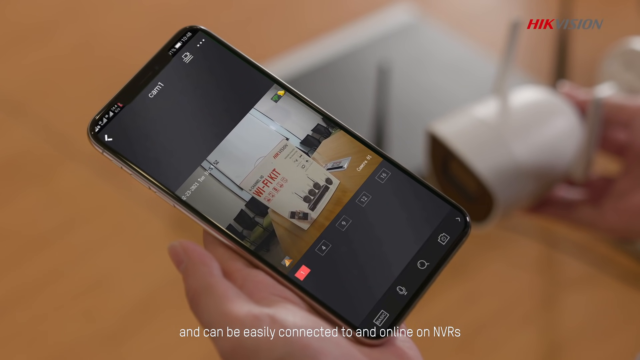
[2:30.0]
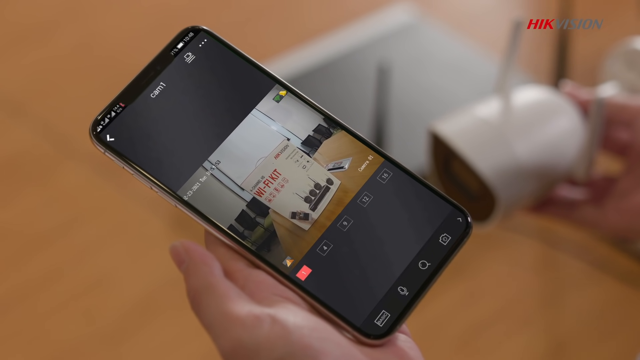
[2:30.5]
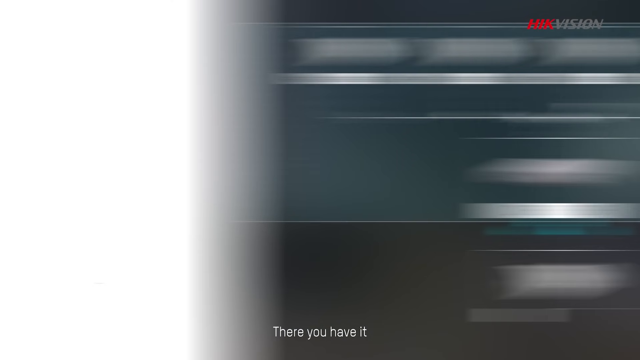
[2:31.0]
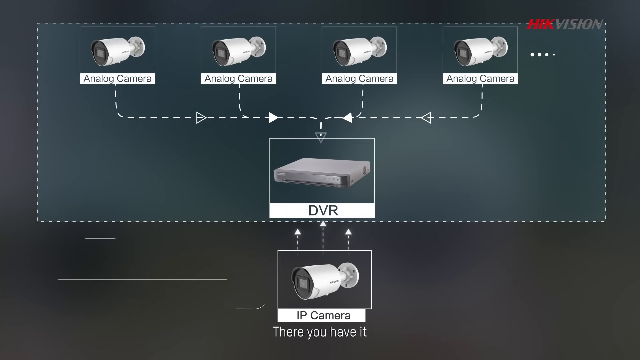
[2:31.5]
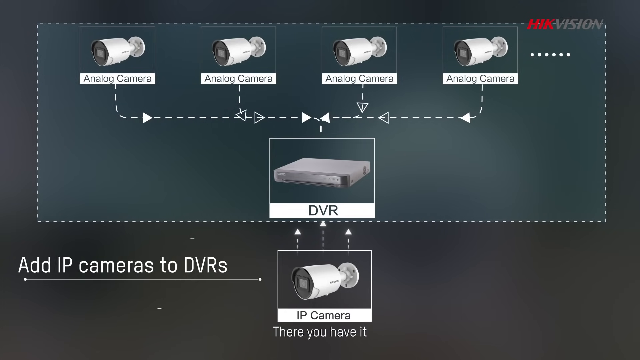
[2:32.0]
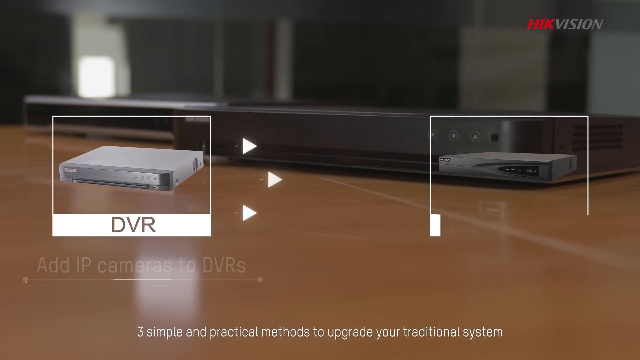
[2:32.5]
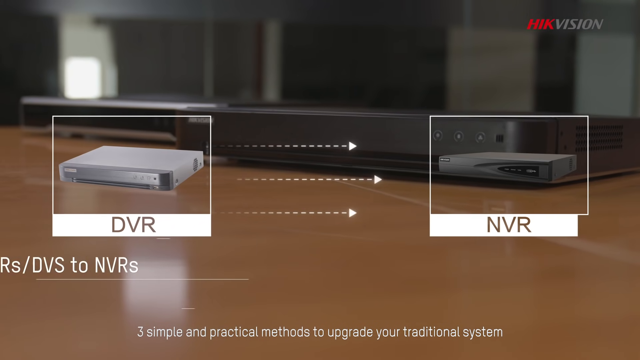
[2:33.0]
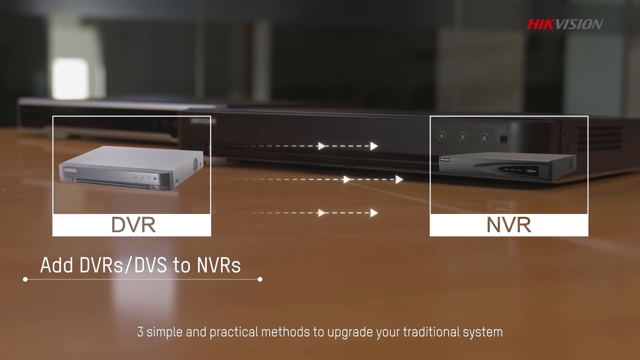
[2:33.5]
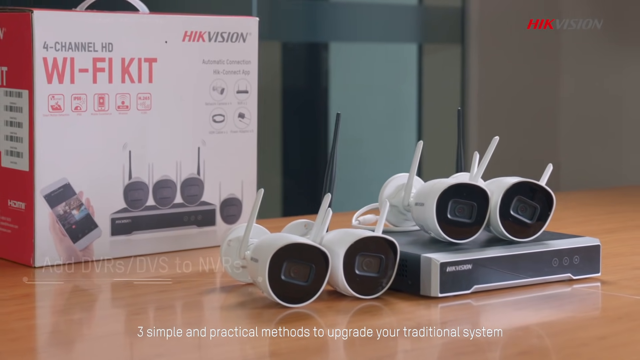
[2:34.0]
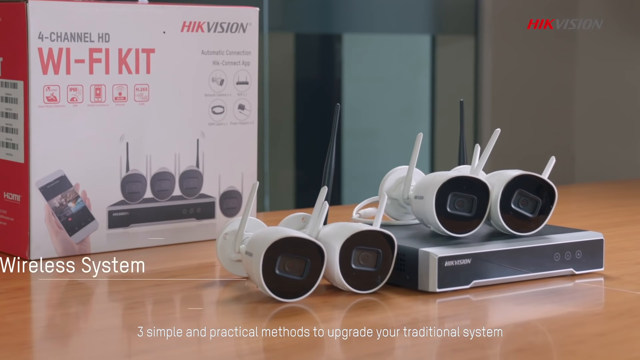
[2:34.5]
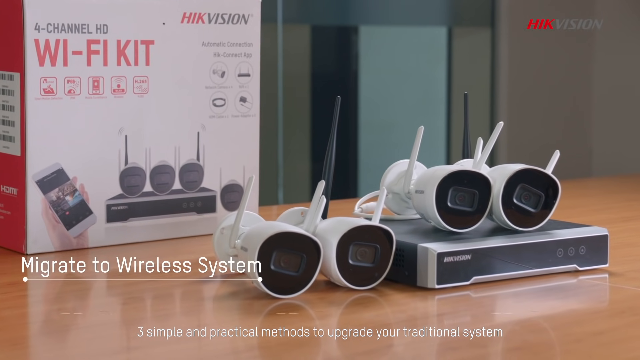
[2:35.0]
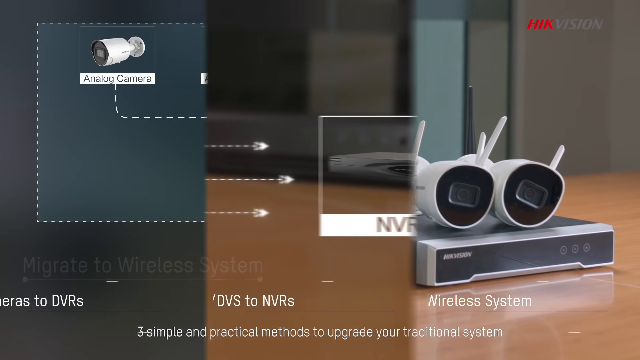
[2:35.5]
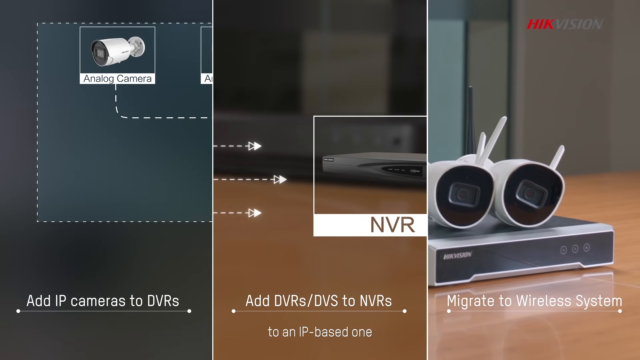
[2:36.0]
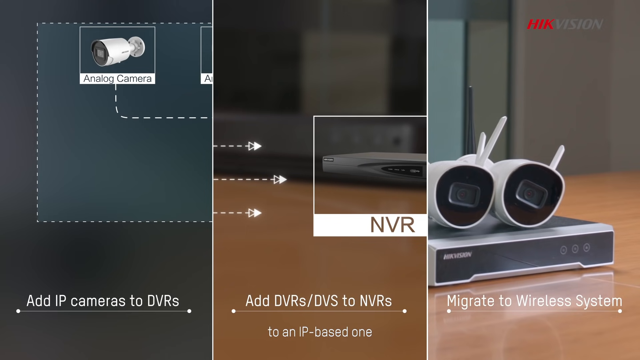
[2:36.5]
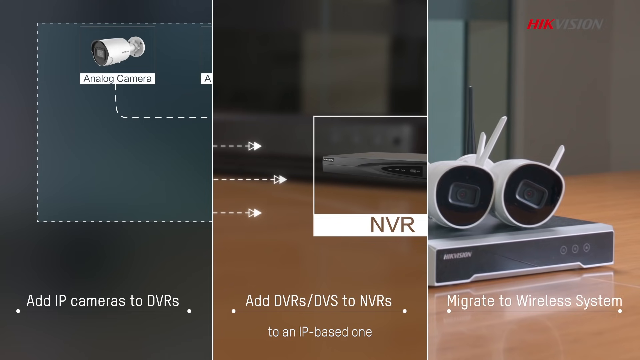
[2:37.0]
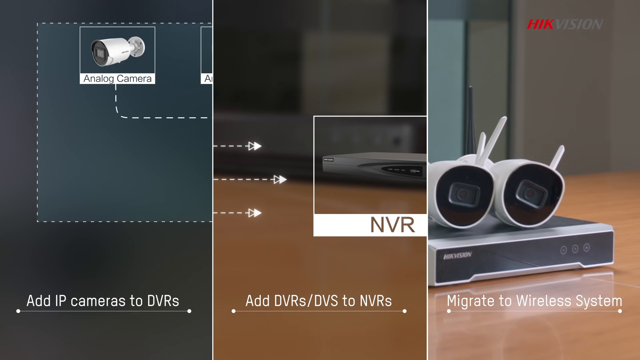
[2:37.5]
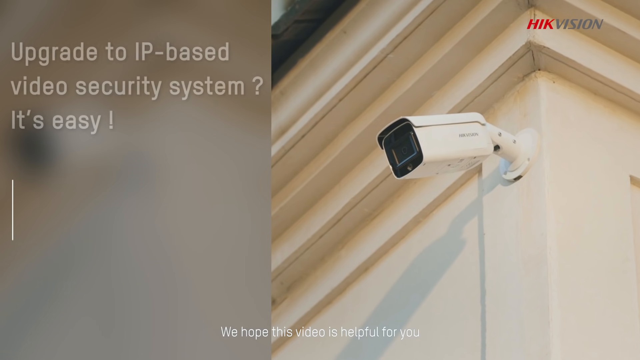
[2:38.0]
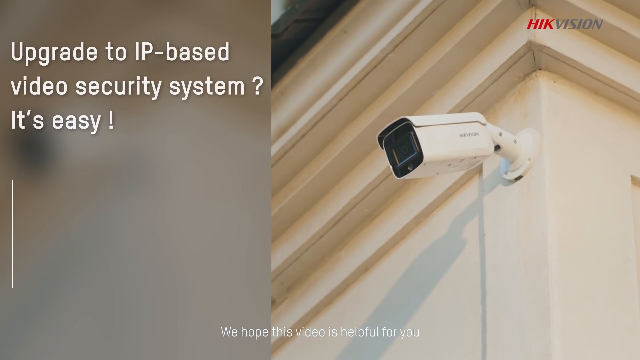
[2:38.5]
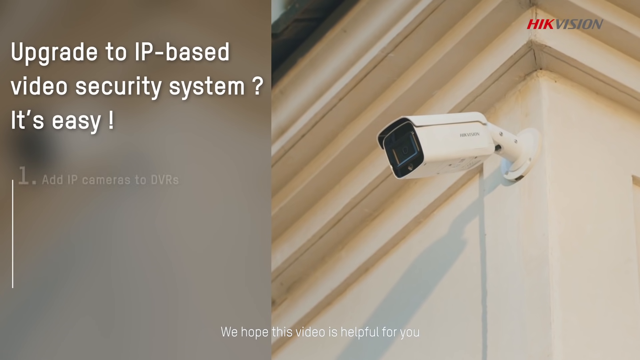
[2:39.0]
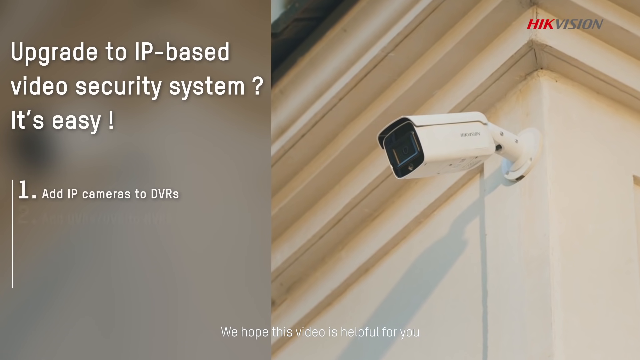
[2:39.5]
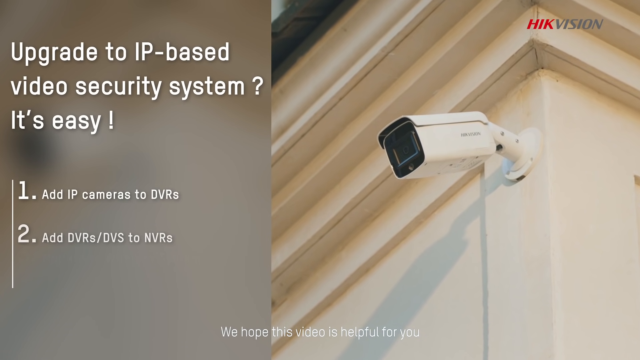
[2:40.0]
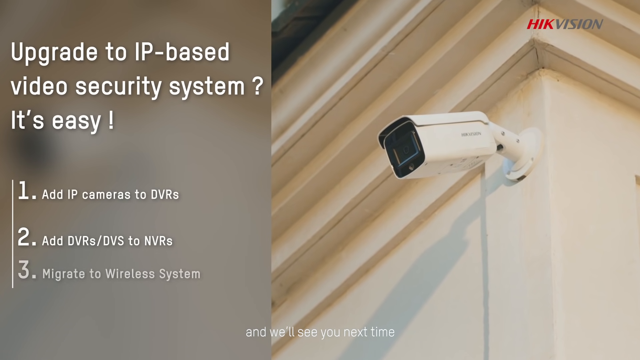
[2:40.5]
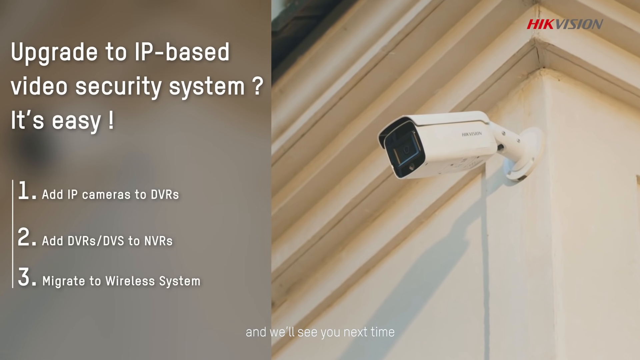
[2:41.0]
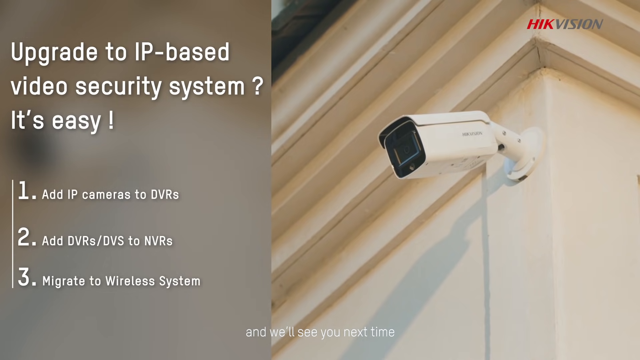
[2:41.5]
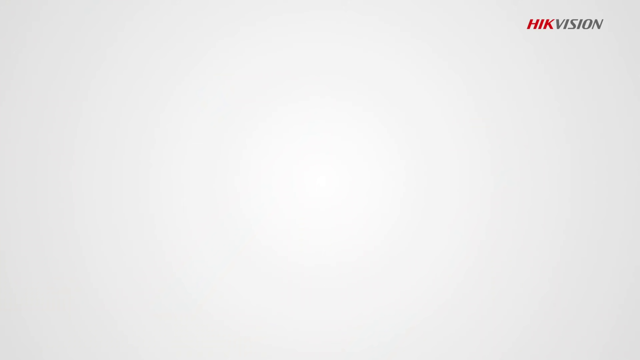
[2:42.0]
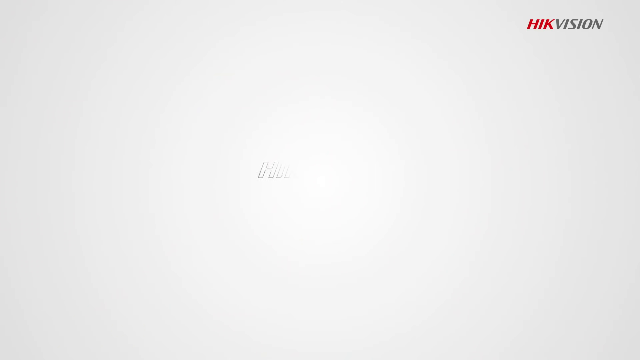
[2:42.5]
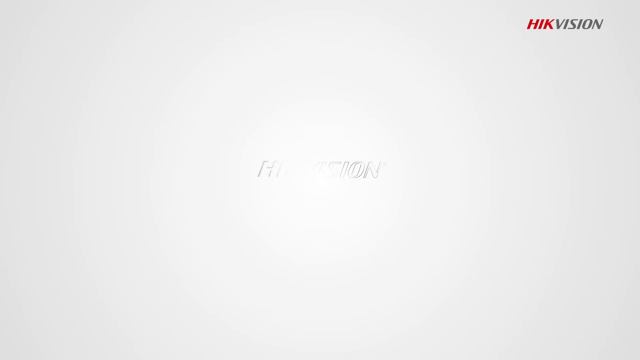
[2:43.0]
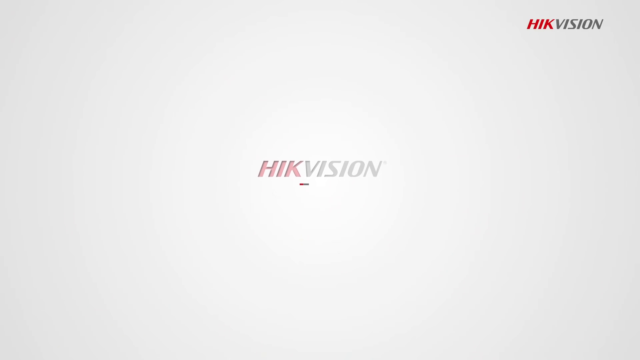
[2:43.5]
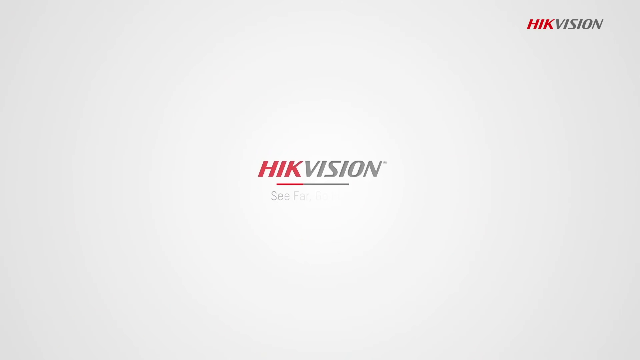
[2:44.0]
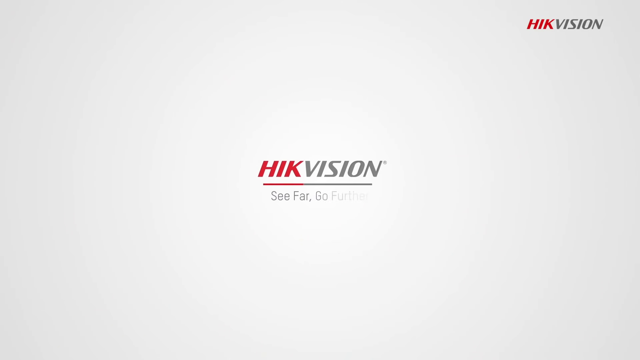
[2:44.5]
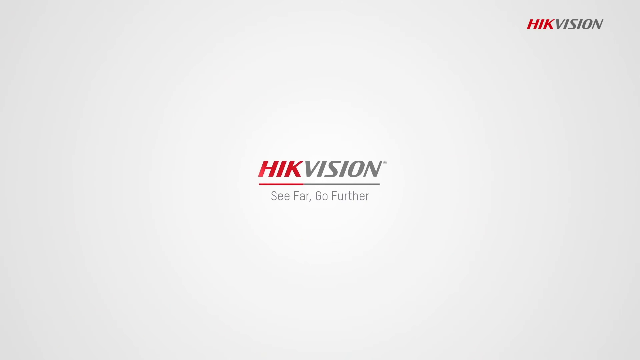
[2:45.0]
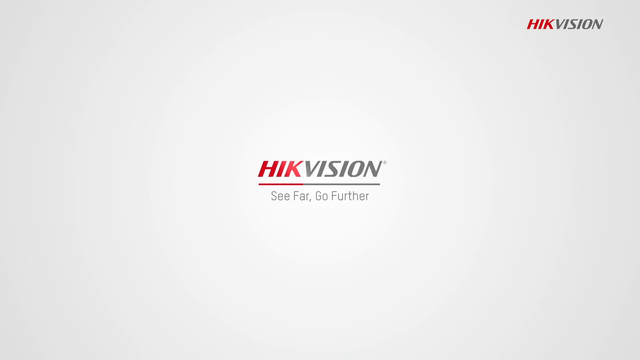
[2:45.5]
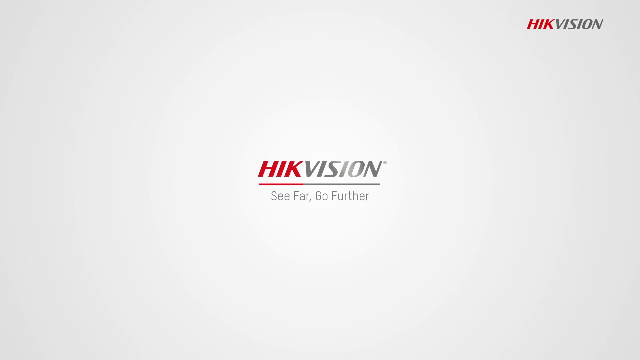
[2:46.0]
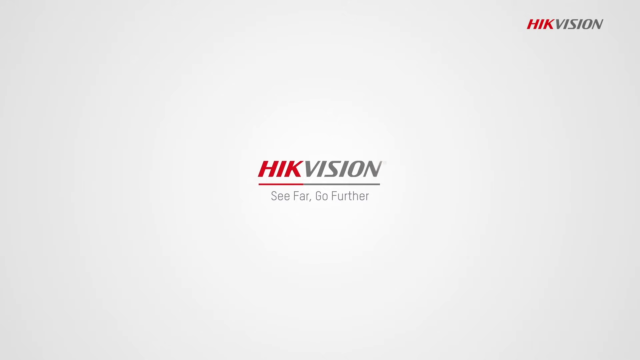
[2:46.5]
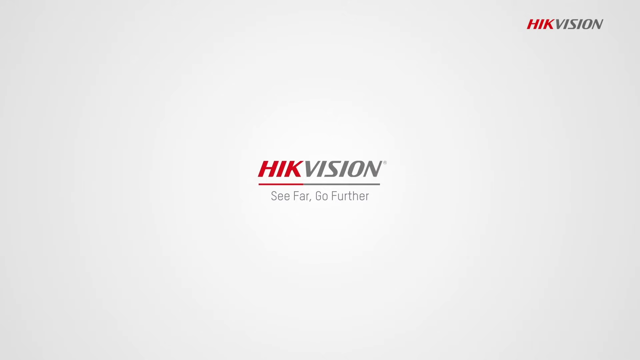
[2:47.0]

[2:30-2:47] The man holds his phone, and a close-up shows the phone in his hand as he watches video of the devices on the table. A three-way split screen reads "add IP camera to DVRs," "add DVRs, DVDs to NVR" and "migrate to a wireless system." The same image as the opening appears, with the camera in the corner and the text "upgrade to IP based video security system? it's easy." Then the text reads "1. add IP cameras to DVR, 2. add DVR, DVDs, DVS to NVRs, 3. migrate to wireless system." The video finishes with the "HikVision" logo in dark grey and the words "see far, go further."